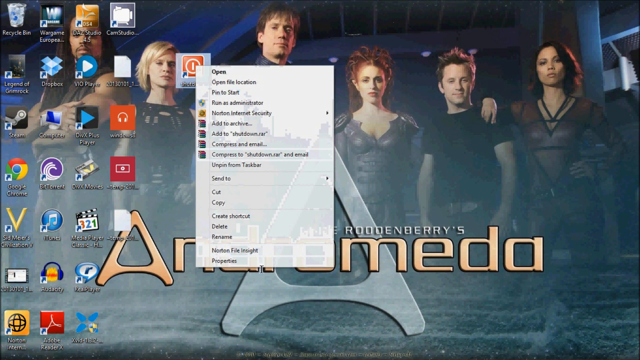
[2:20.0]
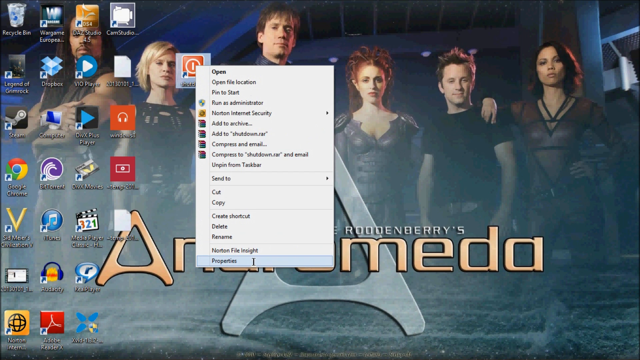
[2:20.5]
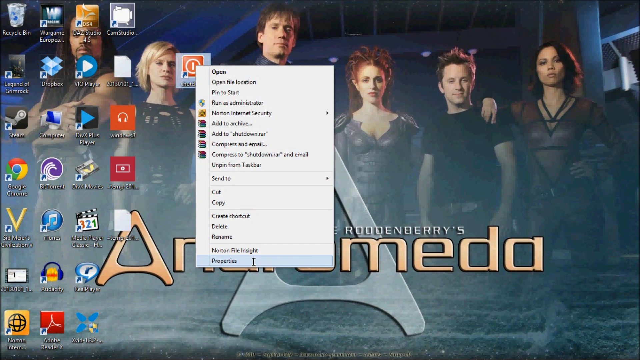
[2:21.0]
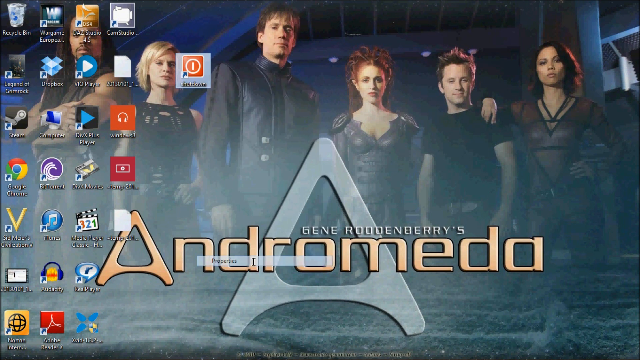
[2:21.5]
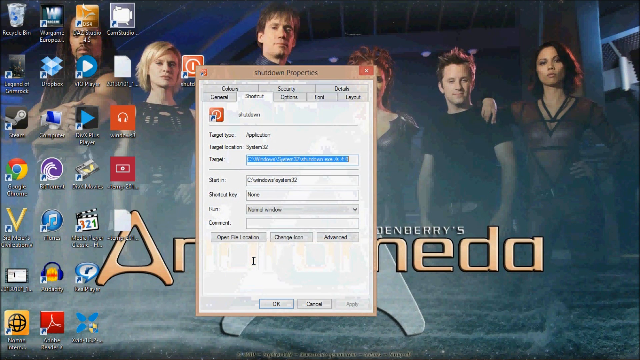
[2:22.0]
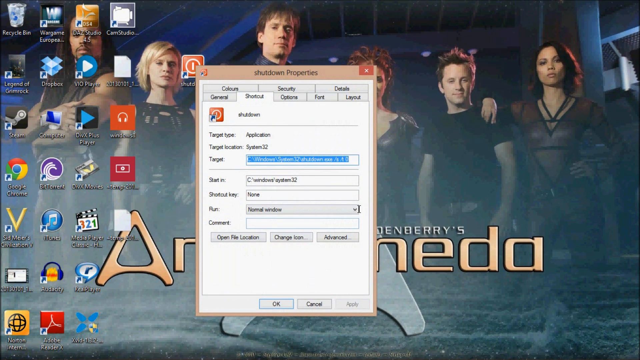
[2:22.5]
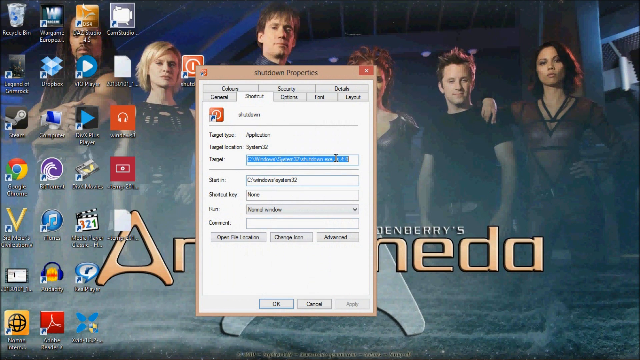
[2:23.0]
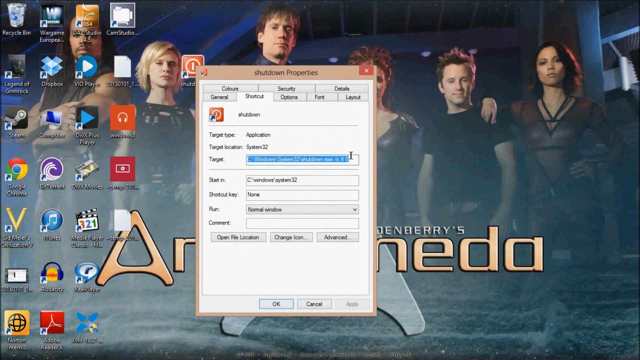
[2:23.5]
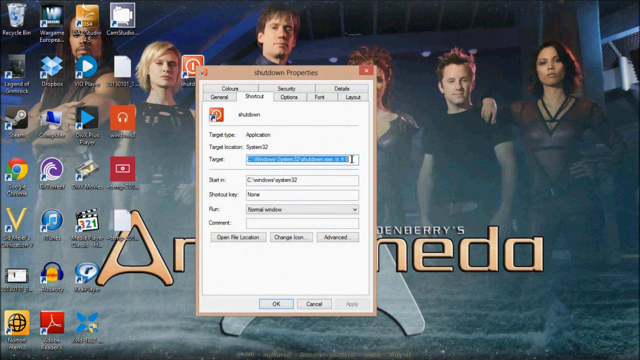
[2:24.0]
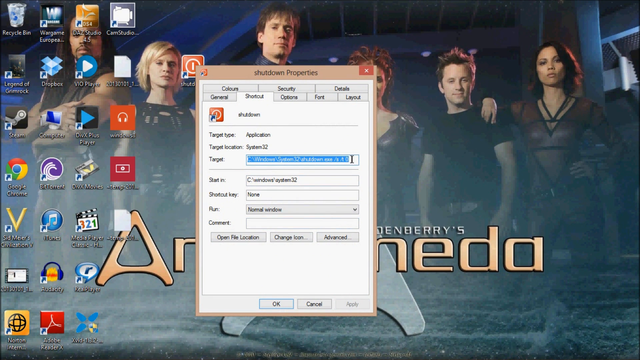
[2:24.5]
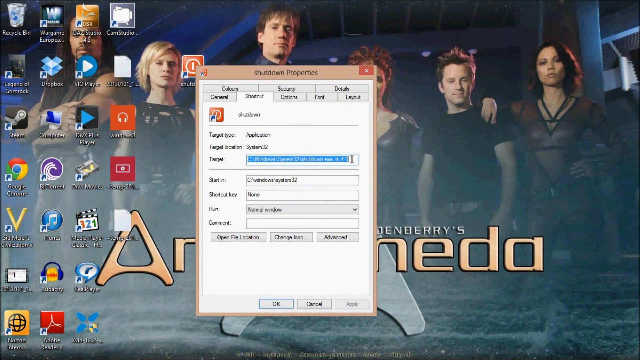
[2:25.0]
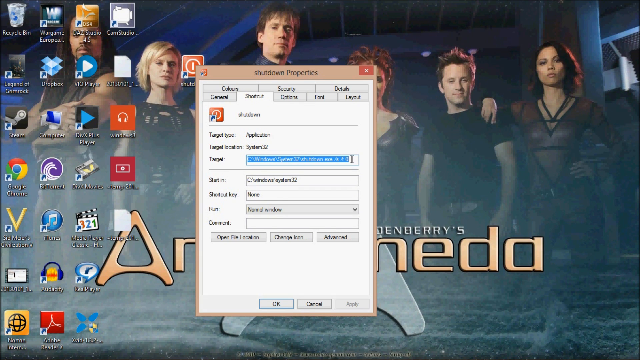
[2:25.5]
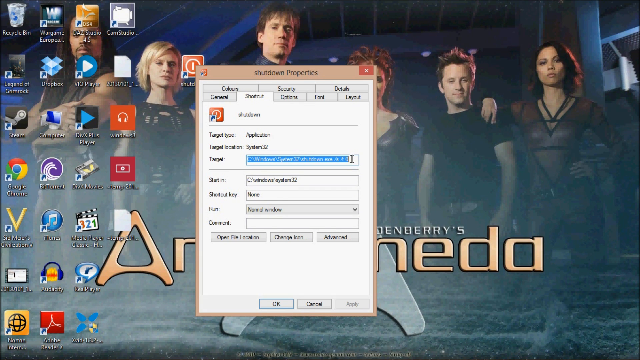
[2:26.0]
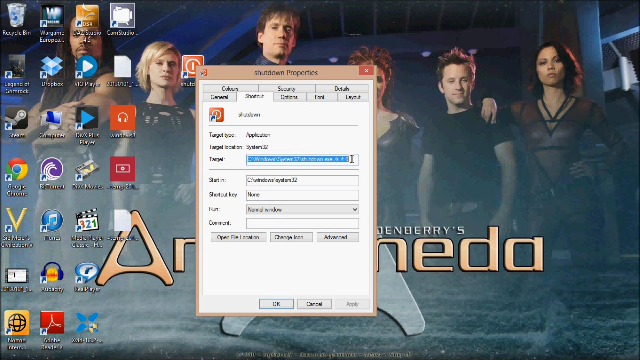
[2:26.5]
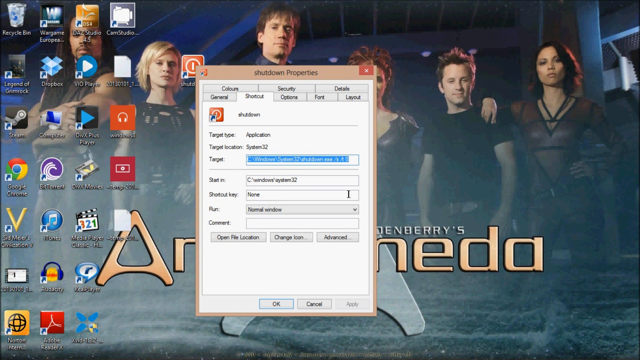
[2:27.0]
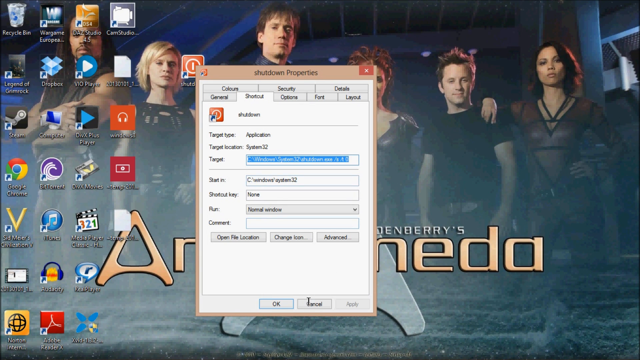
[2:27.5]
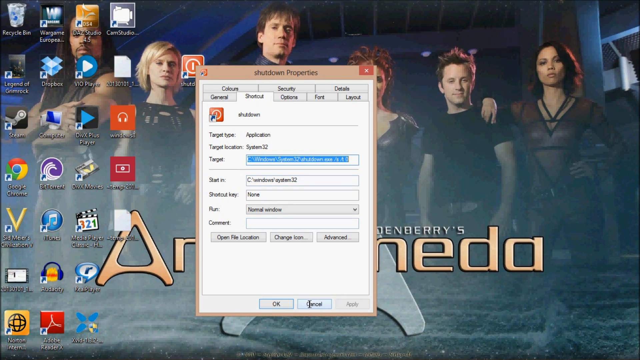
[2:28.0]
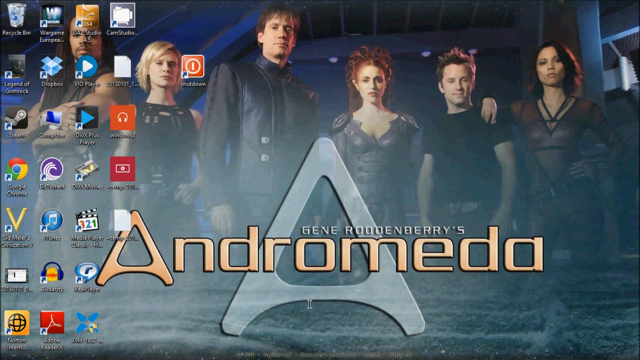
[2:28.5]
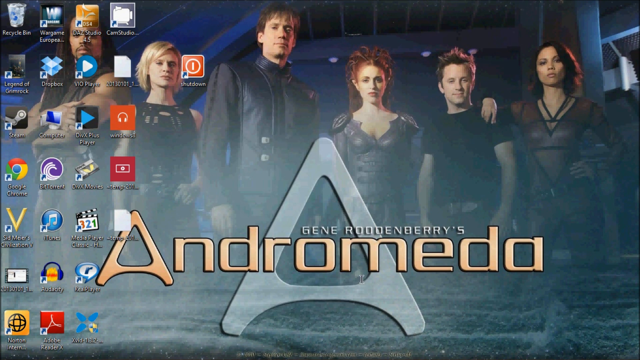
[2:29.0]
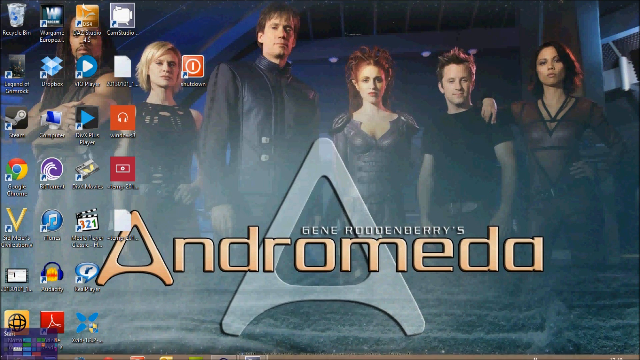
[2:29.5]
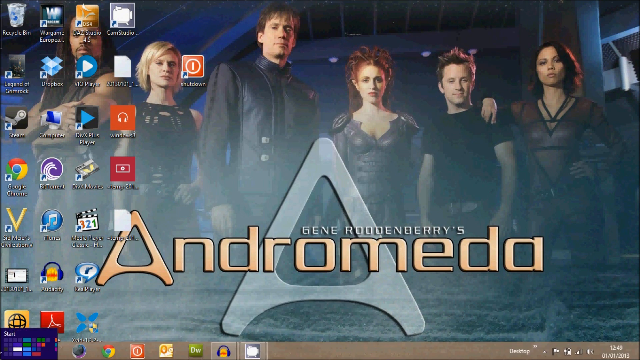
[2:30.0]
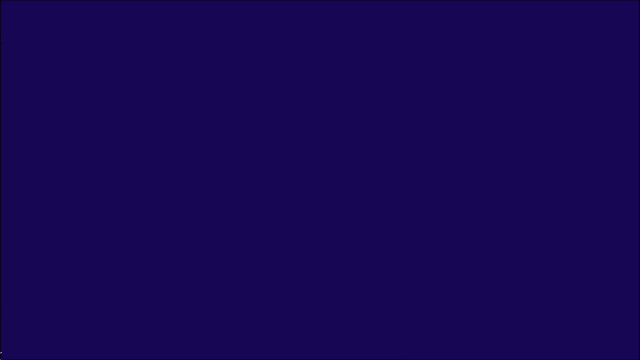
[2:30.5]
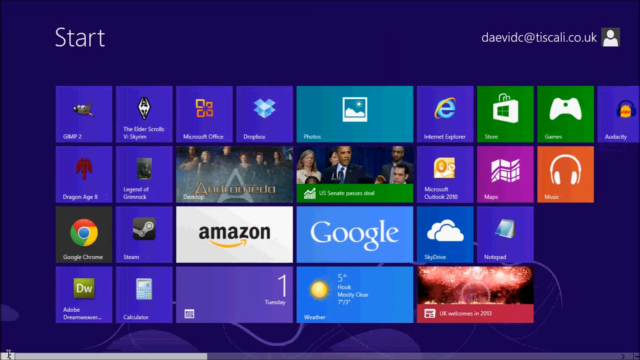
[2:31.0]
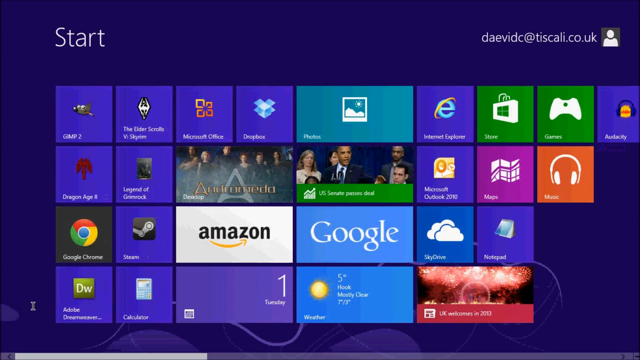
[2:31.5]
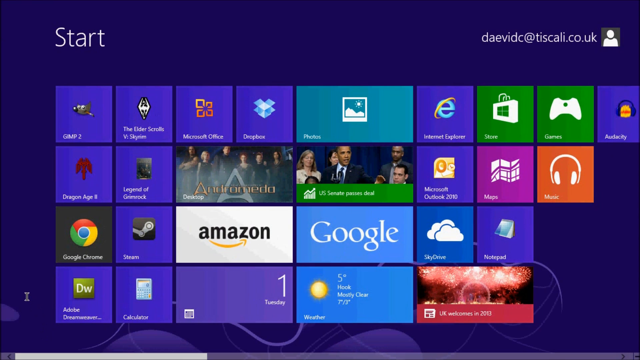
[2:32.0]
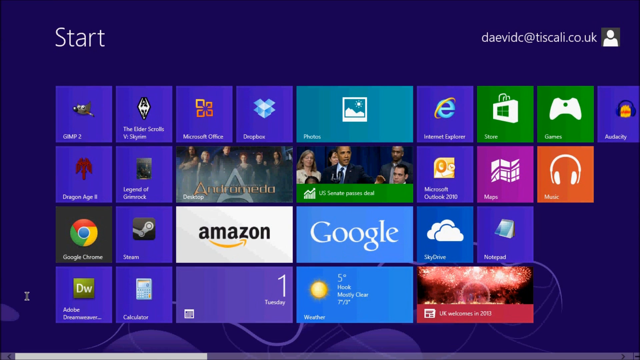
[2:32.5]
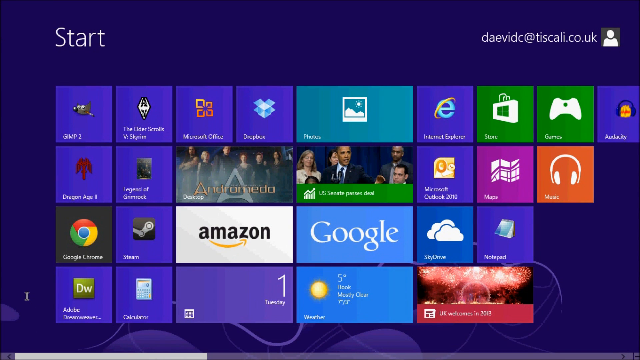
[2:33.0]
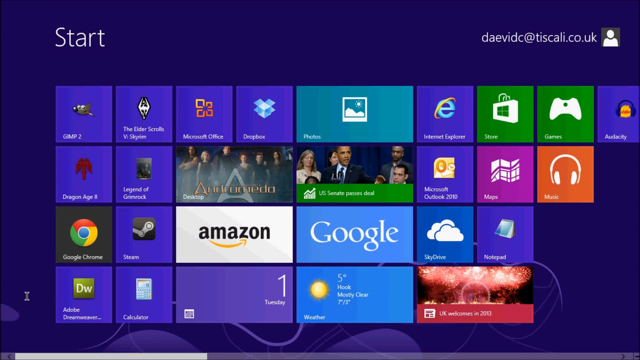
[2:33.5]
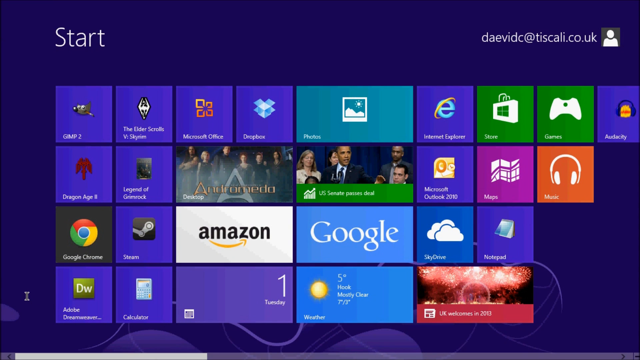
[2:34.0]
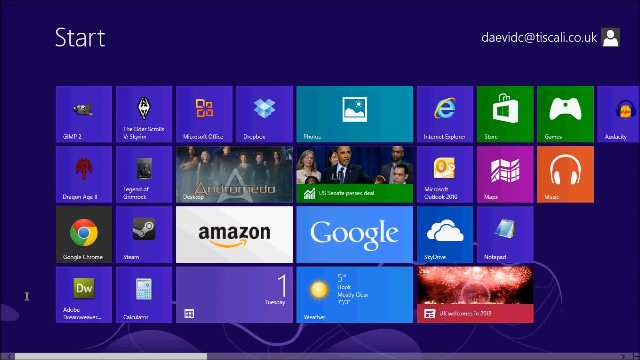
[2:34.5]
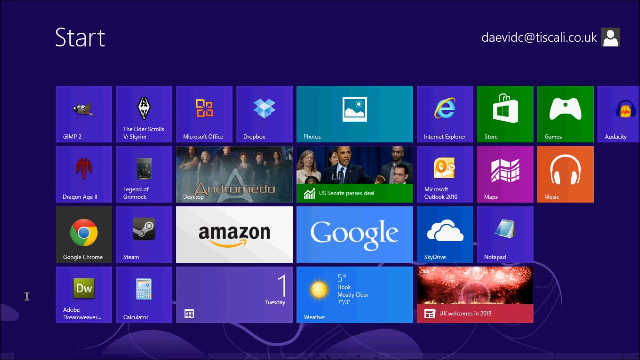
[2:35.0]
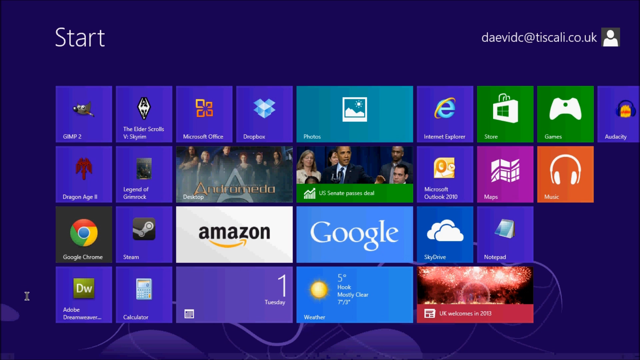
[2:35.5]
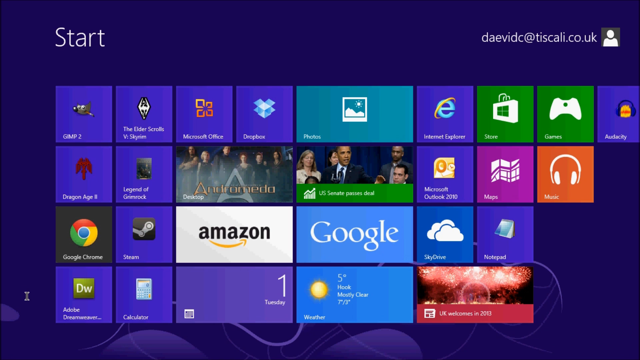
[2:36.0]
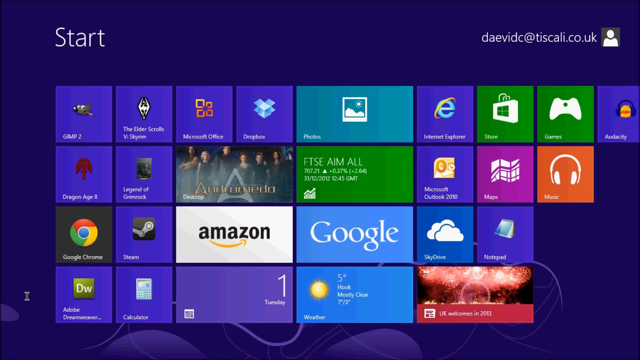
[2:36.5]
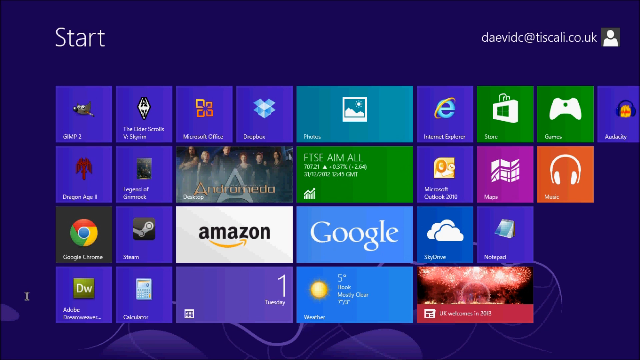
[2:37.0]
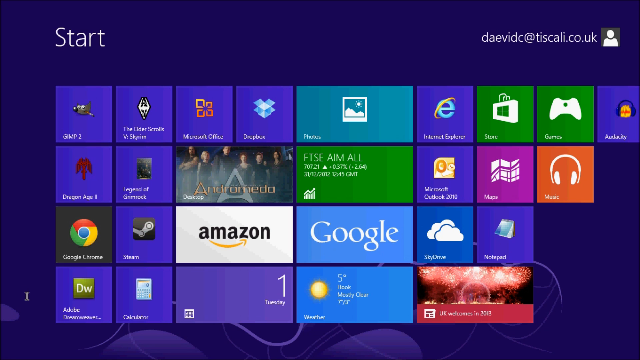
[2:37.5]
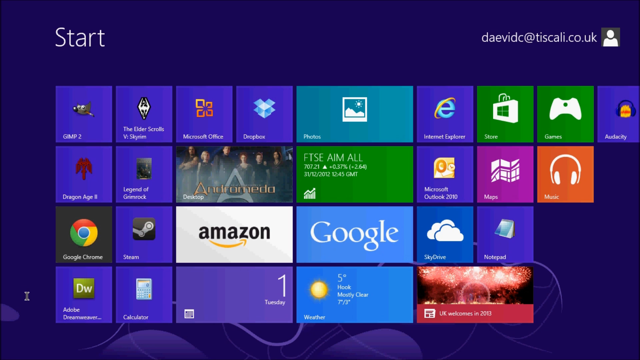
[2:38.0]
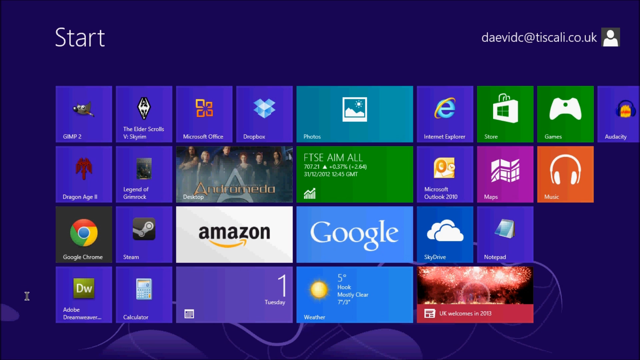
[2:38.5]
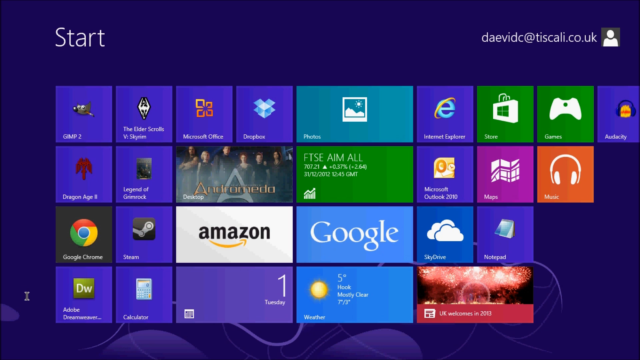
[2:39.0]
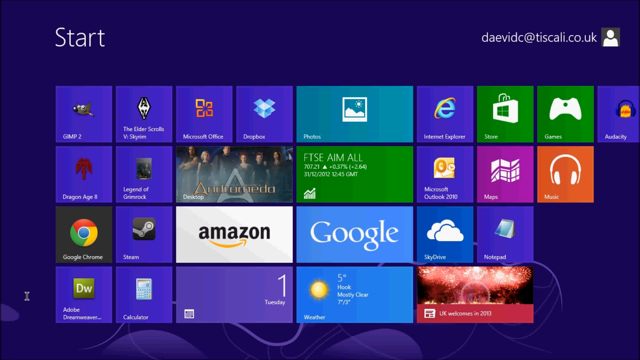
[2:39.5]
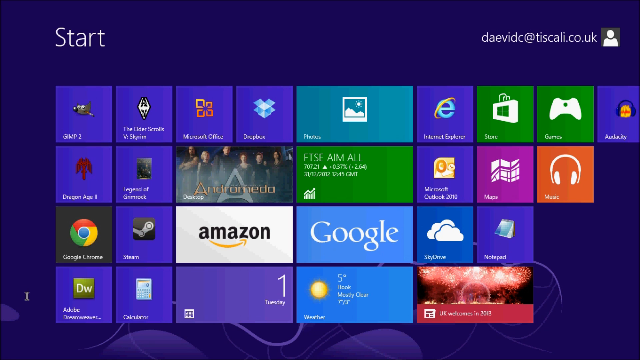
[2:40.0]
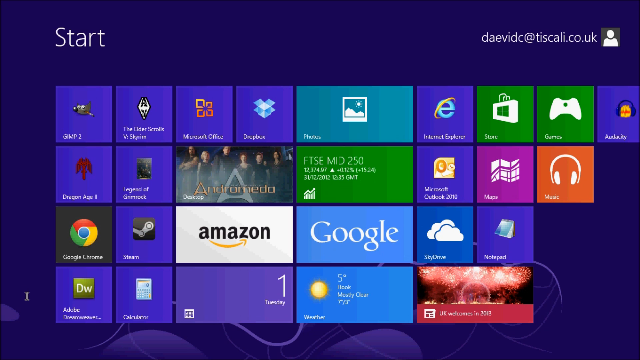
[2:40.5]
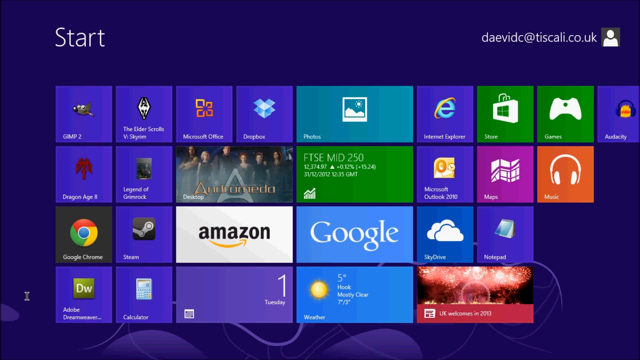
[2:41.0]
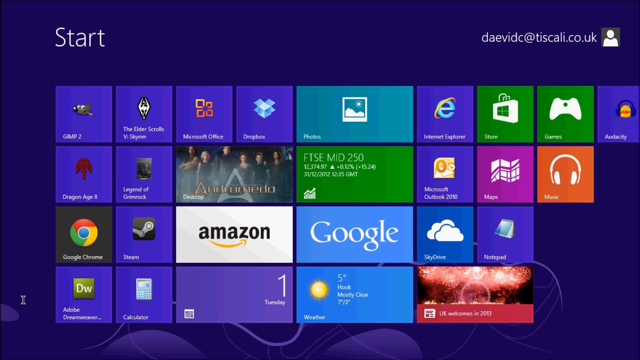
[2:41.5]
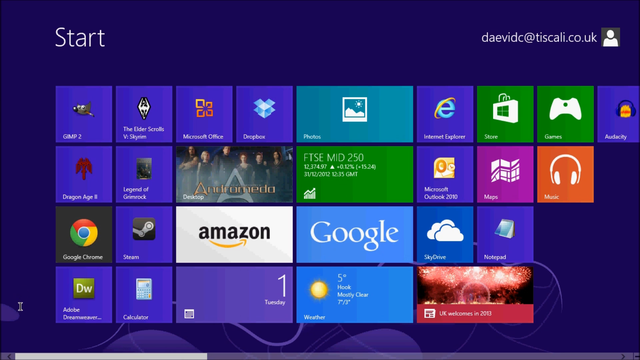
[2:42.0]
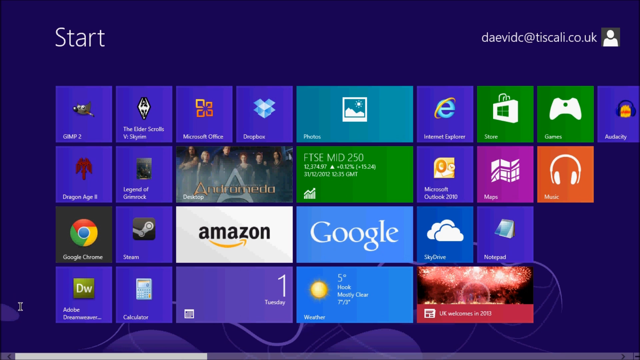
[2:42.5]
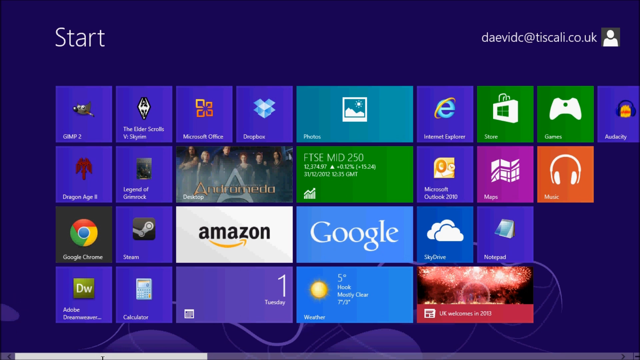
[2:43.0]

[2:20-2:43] What seems to be a Windows control area is shown, from which other areas such as files can be reached. It is unclear which item is open, but "open" appears at the top, followed by "open file location", "pin to start", "run as administrator", "Norton Internet Security", "add to archive" and "add to shutdown", which is kind of blurred. The person clicks on the shortcut for the shutdown app, and its properties window comes up. Attention seems focused on the target area: "target type" reads "application", with the target location next to it, and "target" shows an address for the item's location inside the computer, highlighted in blue. The person moves down, clicks off the window and closes it, returning to the home page, where they seem more interested in their apps.